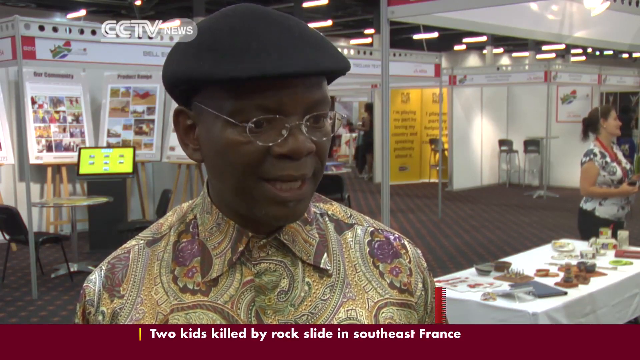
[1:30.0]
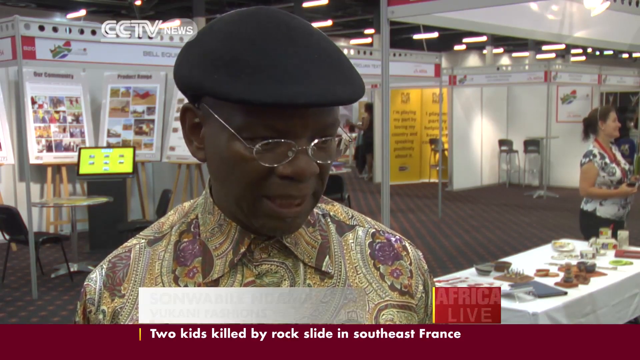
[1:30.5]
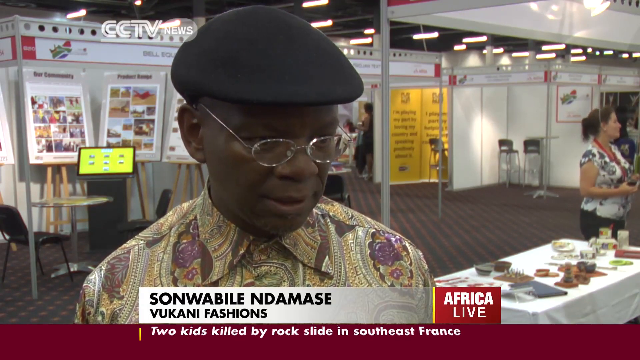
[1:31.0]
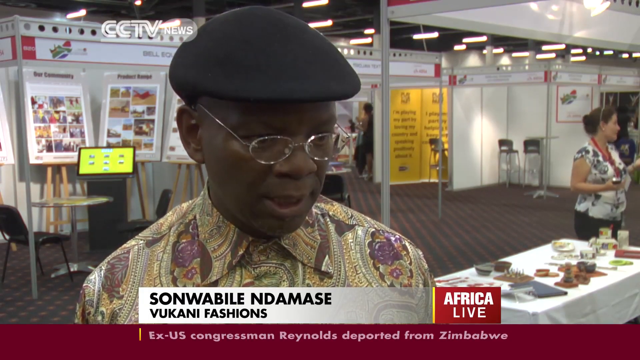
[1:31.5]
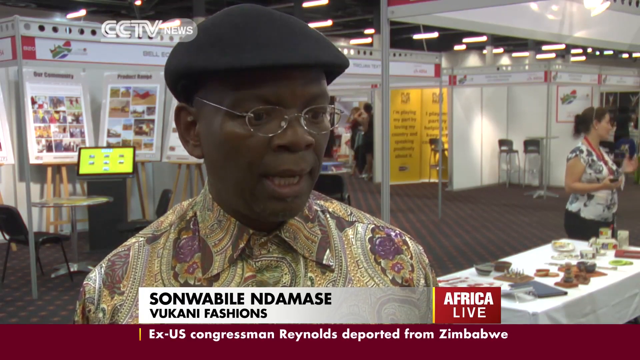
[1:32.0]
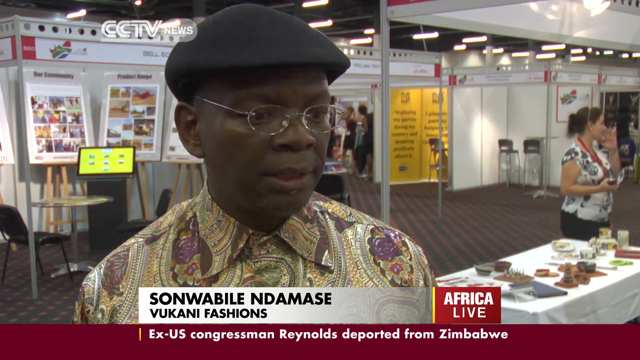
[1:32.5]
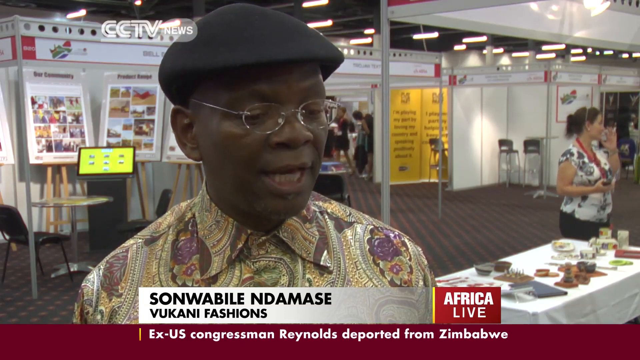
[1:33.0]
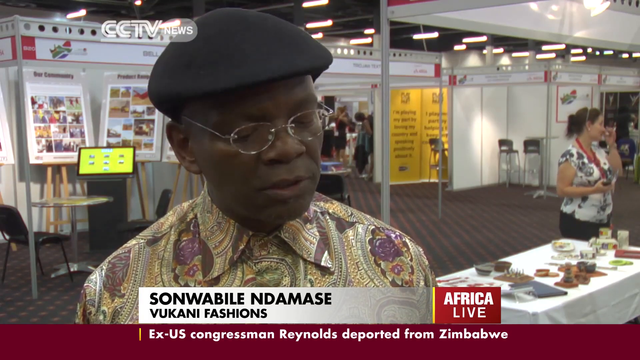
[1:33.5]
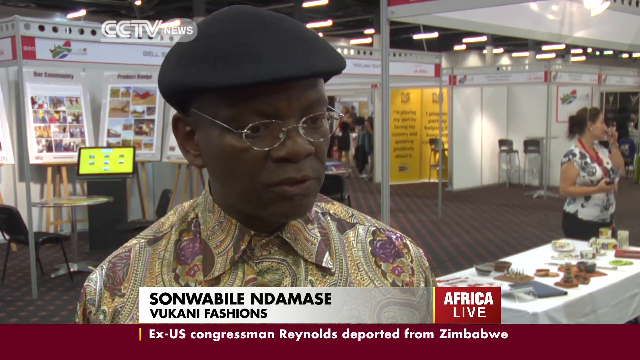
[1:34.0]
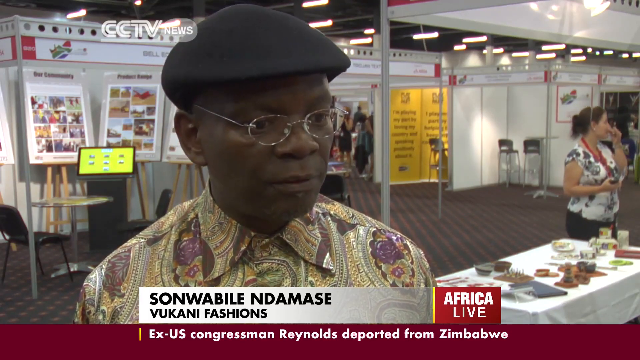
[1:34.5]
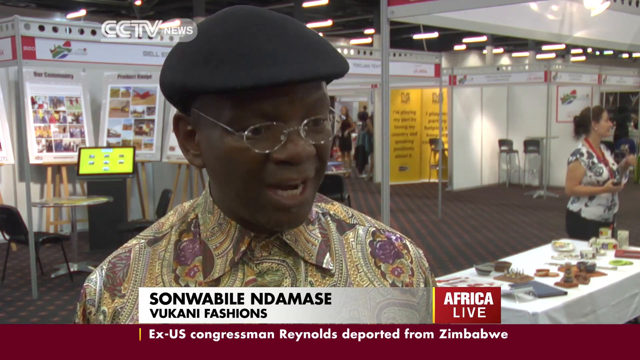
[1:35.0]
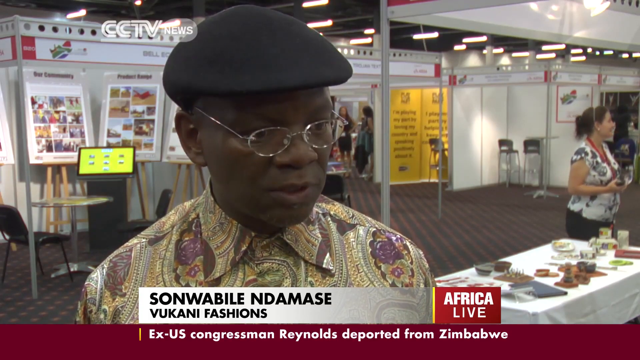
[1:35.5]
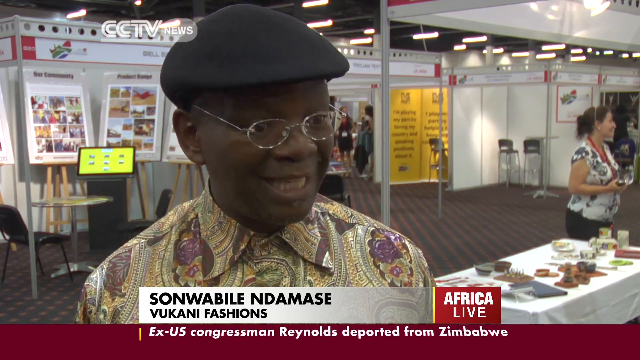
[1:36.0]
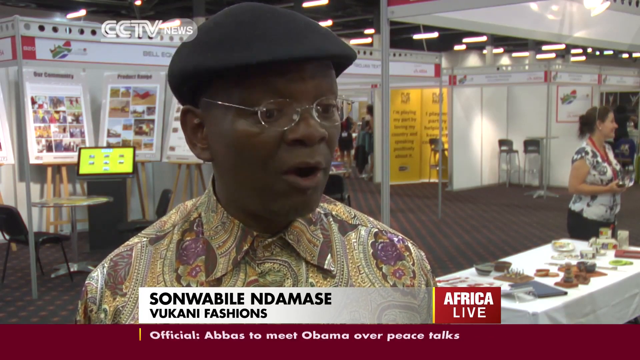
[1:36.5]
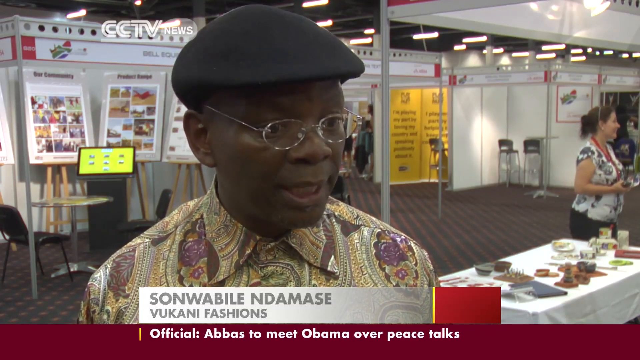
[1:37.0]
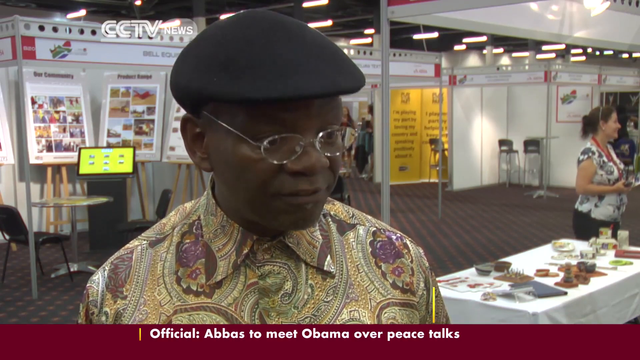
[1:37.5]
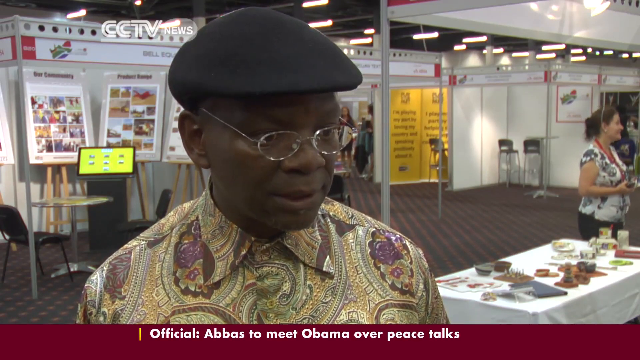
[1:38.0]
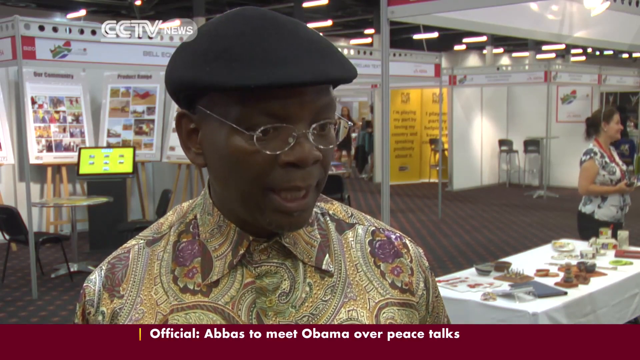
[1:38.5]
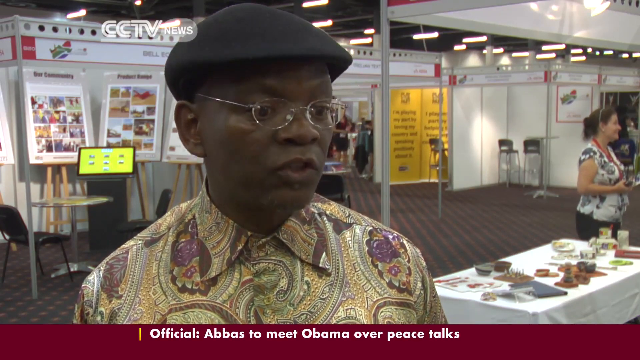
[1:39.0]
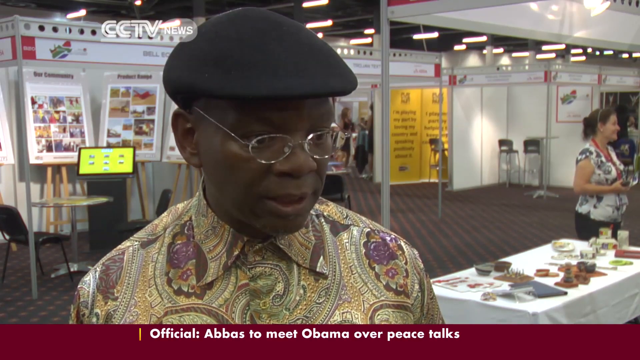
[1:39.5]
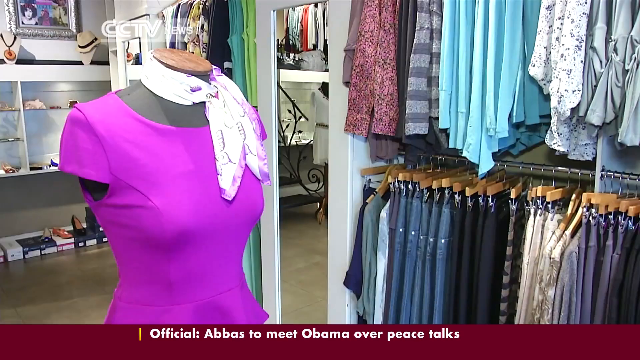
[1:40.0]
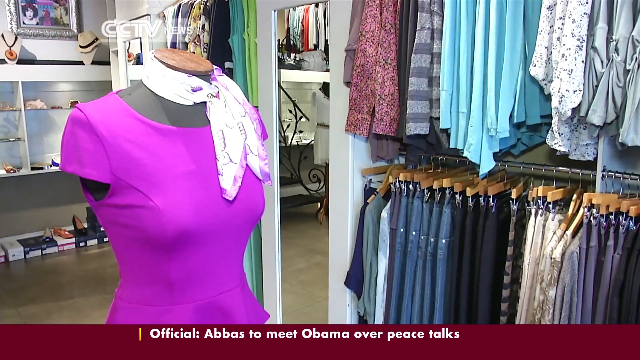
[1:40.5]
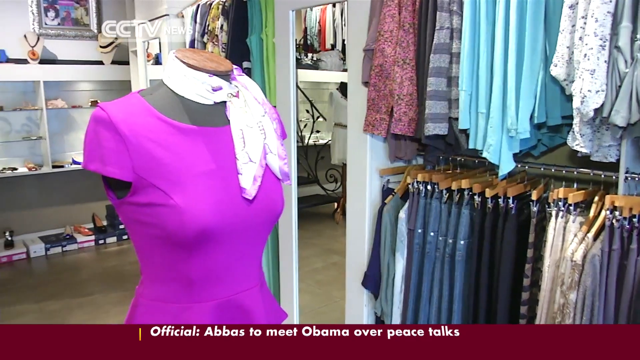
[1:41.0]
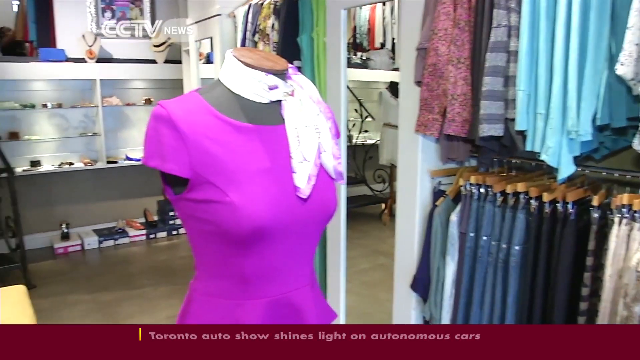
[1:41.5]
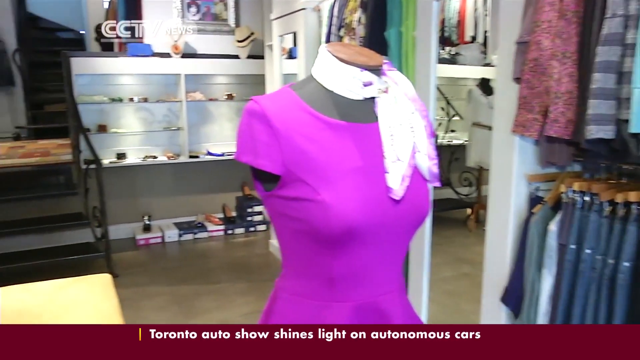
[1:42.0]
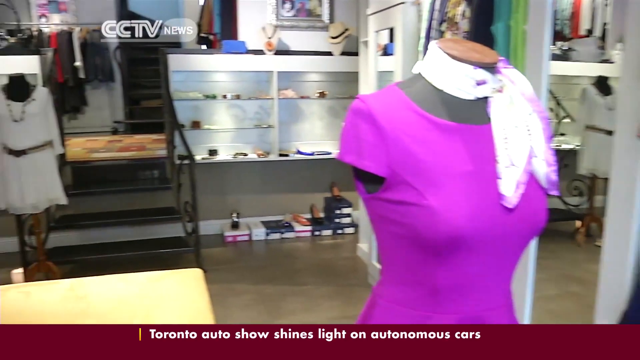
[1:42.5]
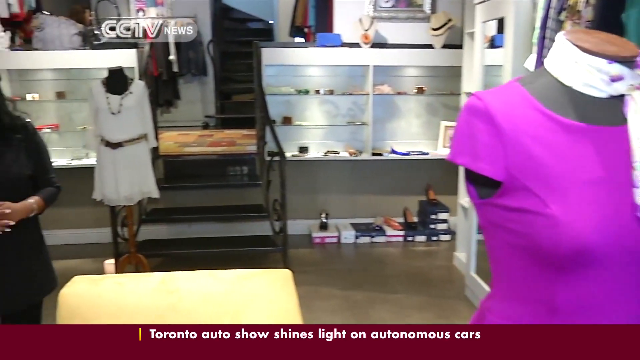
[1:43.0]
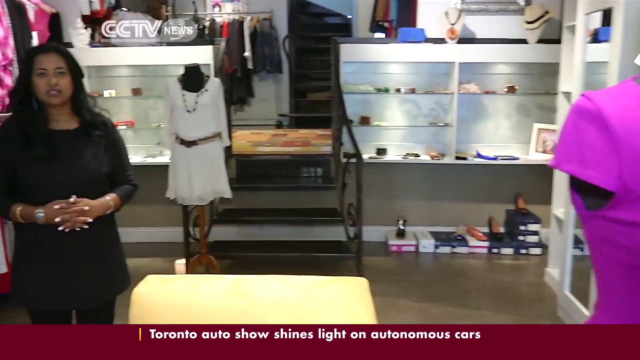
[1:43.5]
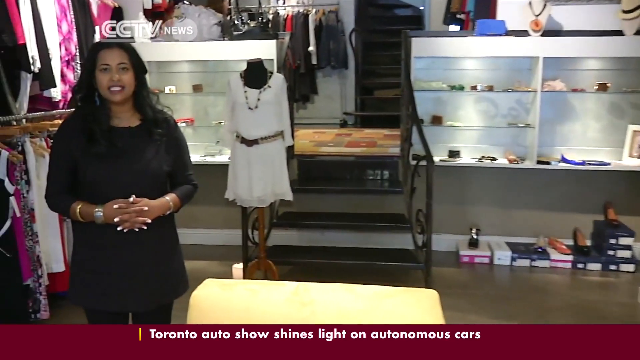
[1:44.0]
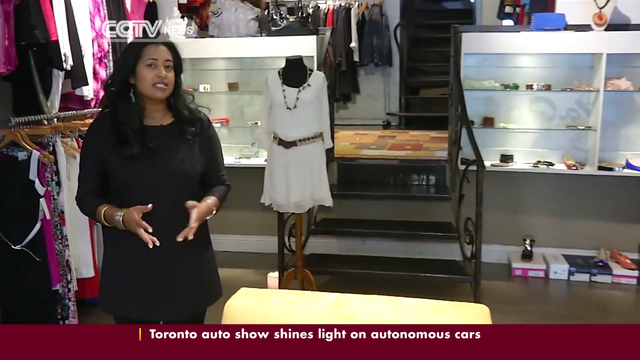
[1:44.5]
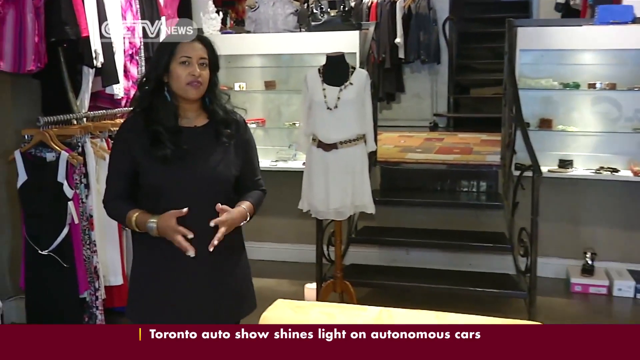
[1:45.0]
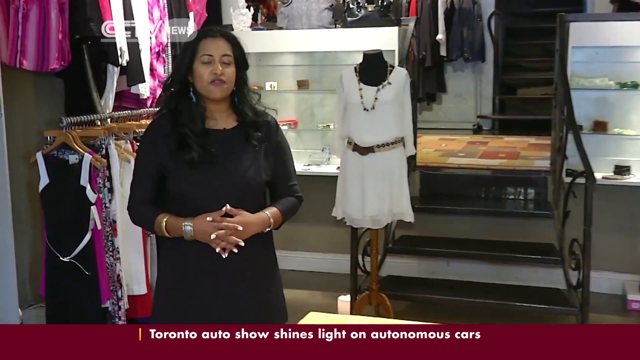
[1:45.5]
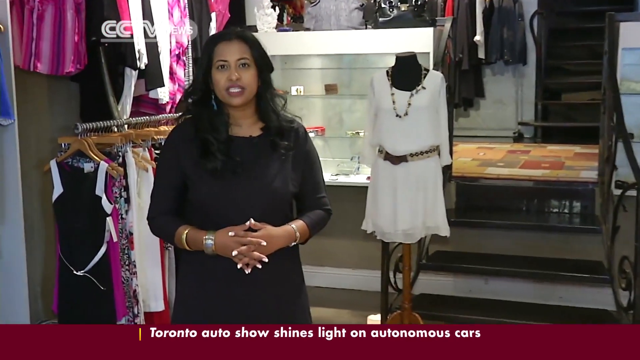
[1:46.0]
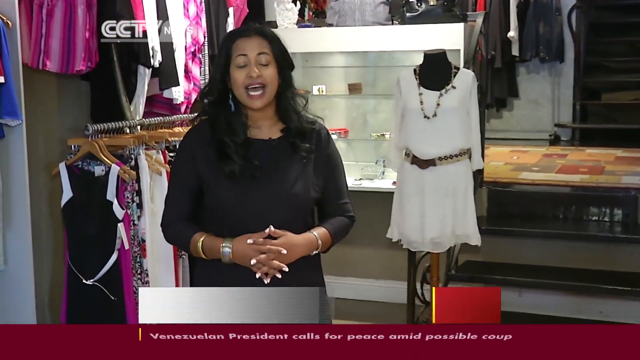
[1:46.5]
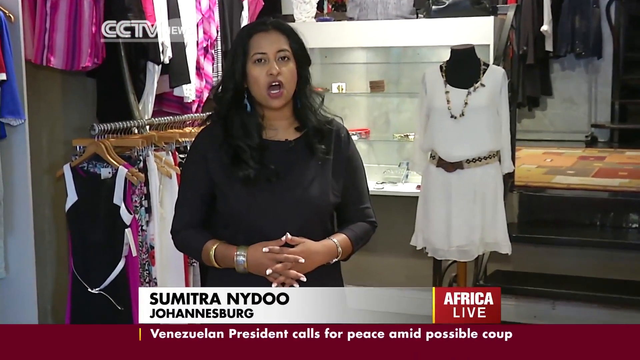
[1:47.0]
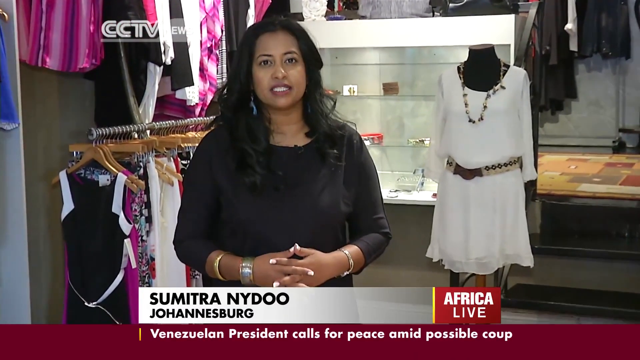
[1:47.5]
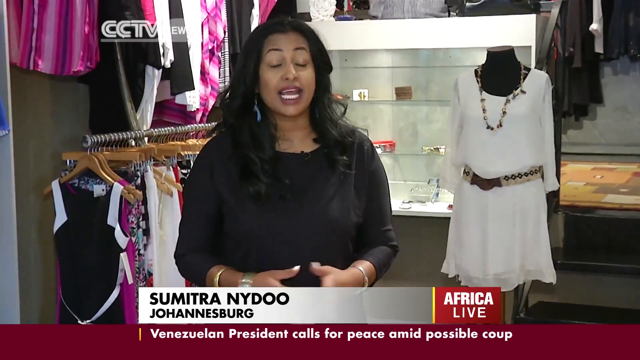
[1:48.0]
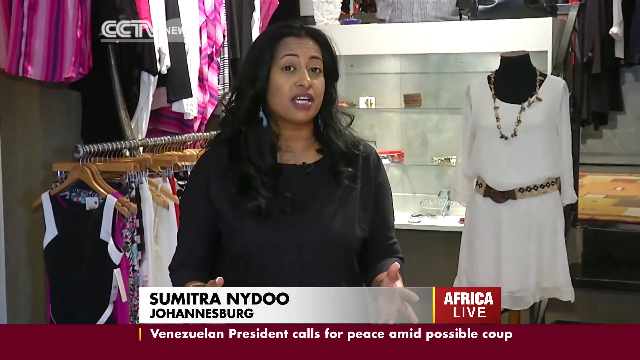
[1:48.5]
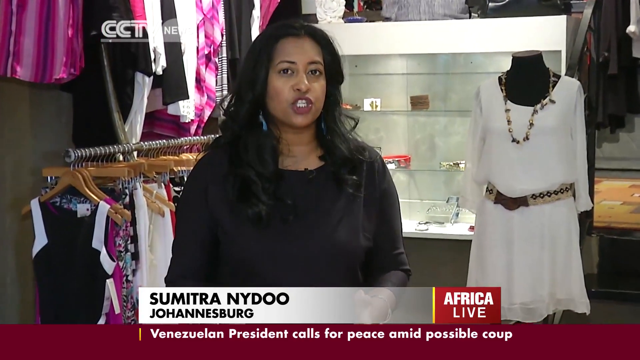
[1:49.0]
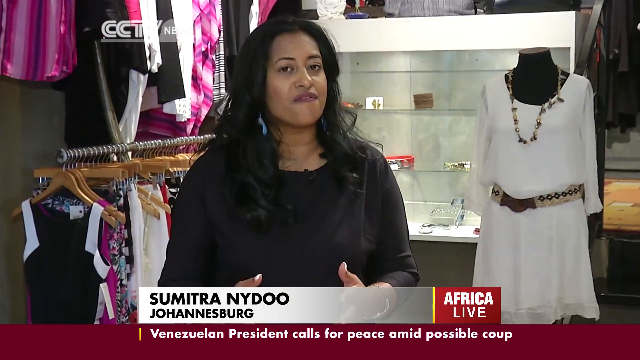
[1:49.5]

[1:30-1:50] A man in a black hat, glasses and a patterned shirt is at some type of convention where vendors sell their products. "CCTV News" appears at the top of the screen. He has a table with an unidentified product on it. His name is spelled S-O-N-W-A-B-I-L-E, and text reads "BUKANI Fashions." News runs along the bottom of the screen. Next comes a place selling women's clothes that looks like a clothing boutique. A woman with black hair in a black dress, who looks kind of Indian and wears earrings, appears; it is unclear whether she is reporting or works there. Her last name is Nydoo, spelled N-Y-D-O-O, apparently from Johannesburg. The report is from CCTV News, Africa Live.